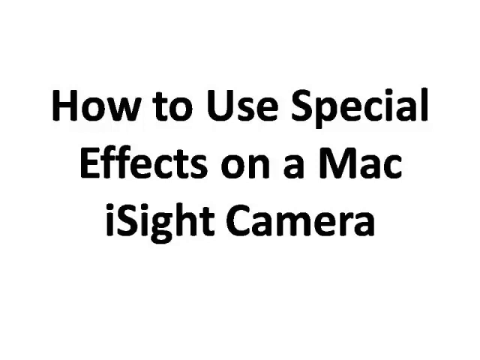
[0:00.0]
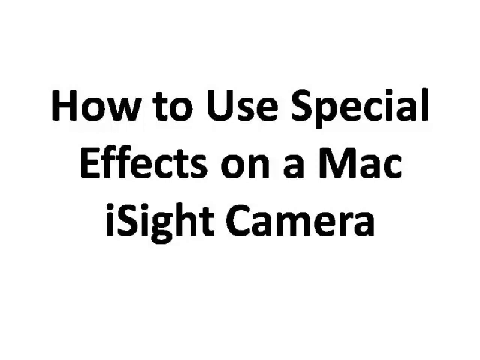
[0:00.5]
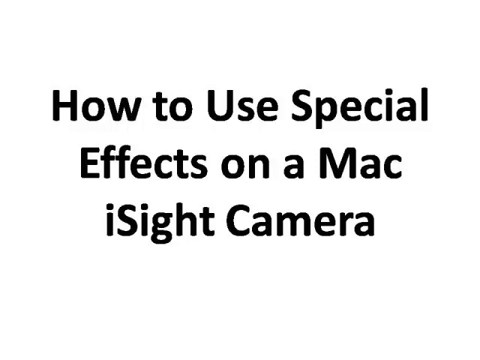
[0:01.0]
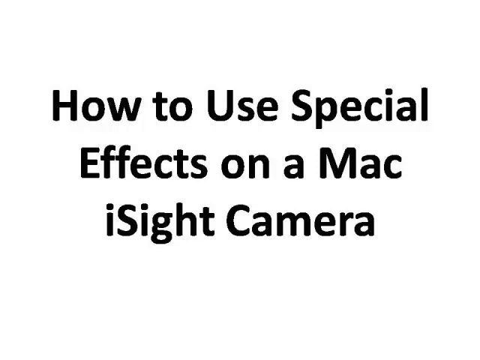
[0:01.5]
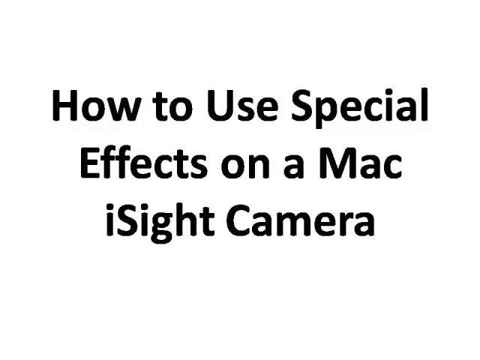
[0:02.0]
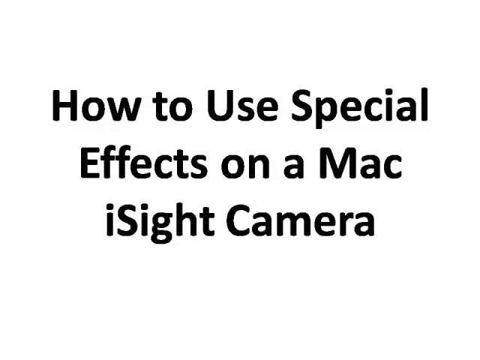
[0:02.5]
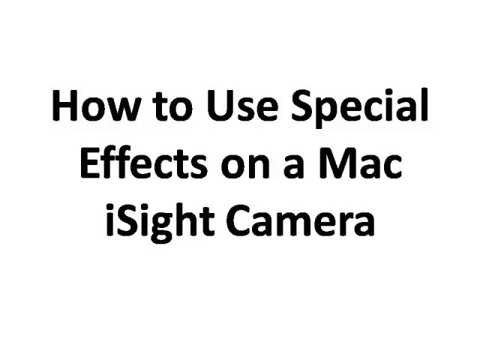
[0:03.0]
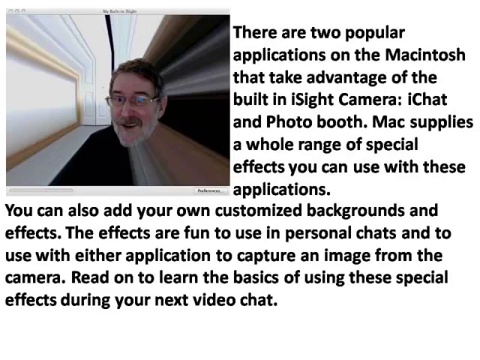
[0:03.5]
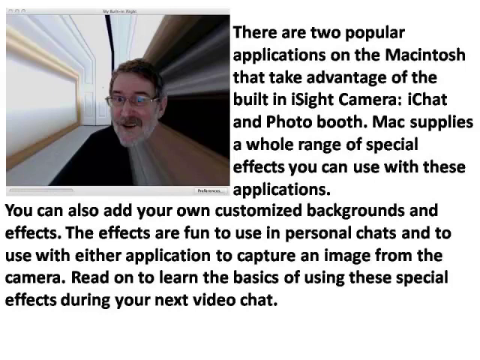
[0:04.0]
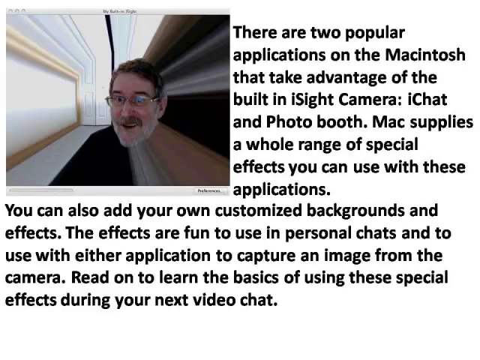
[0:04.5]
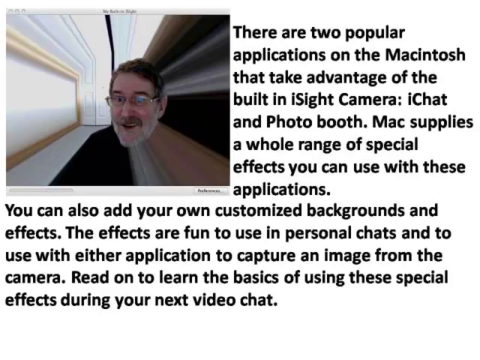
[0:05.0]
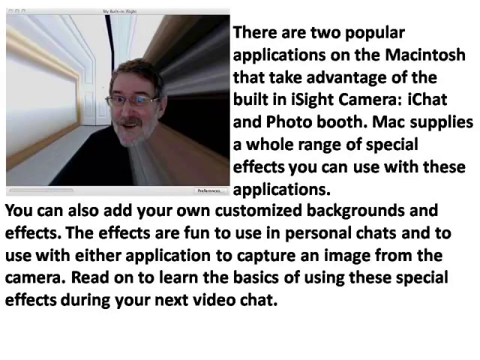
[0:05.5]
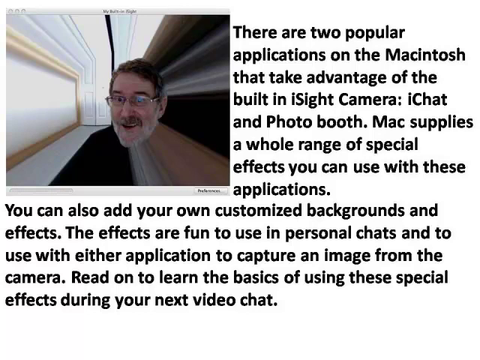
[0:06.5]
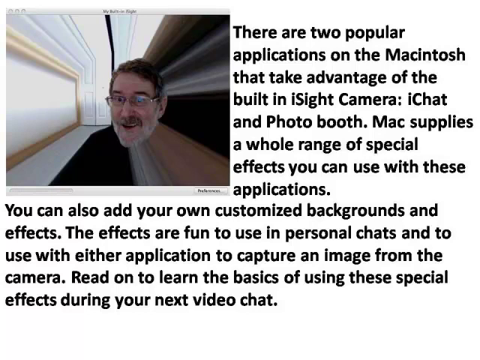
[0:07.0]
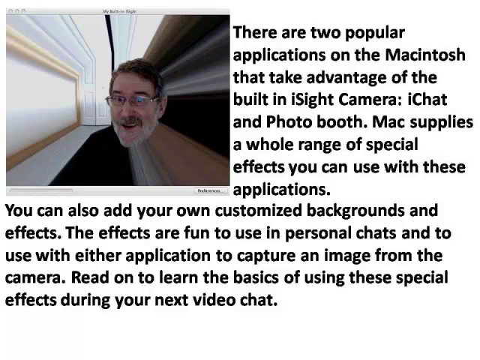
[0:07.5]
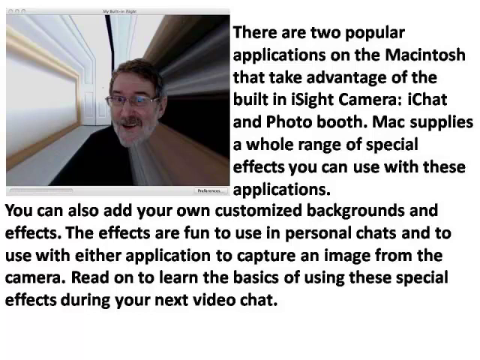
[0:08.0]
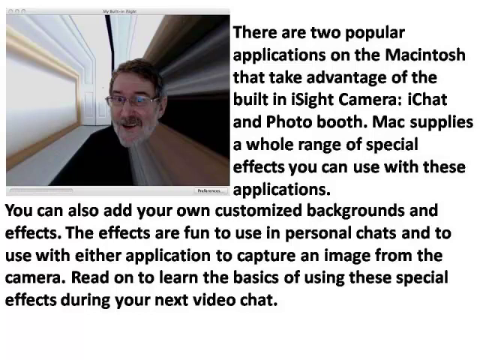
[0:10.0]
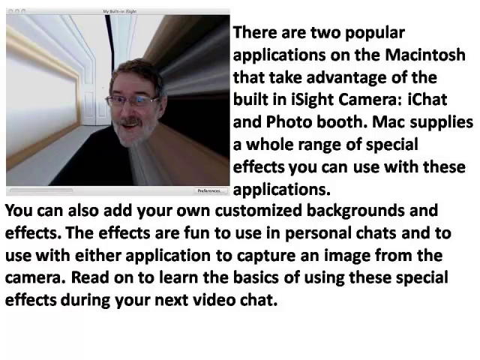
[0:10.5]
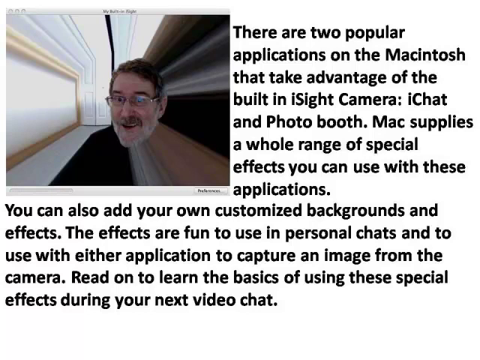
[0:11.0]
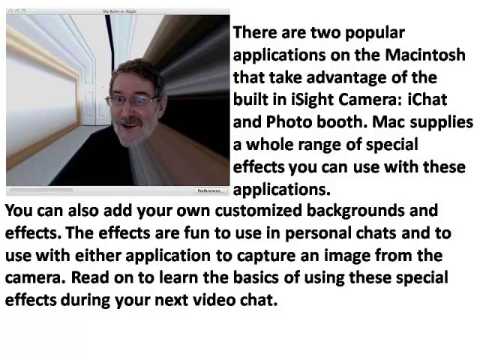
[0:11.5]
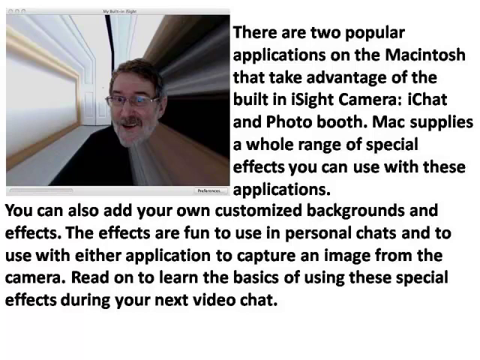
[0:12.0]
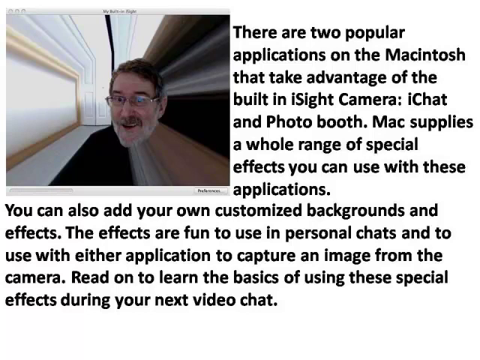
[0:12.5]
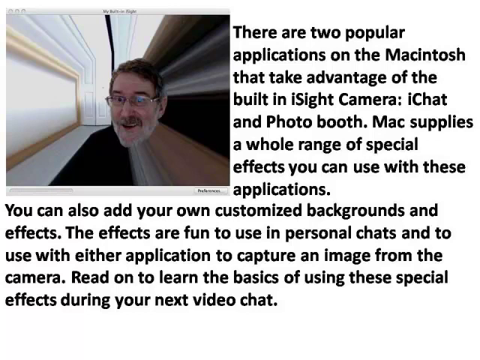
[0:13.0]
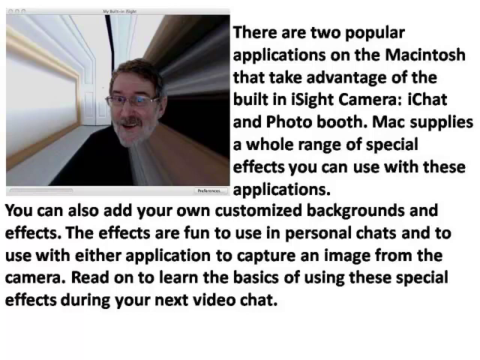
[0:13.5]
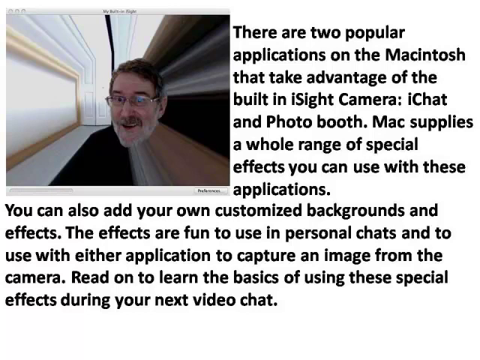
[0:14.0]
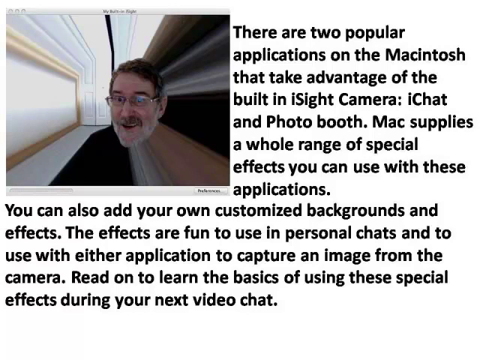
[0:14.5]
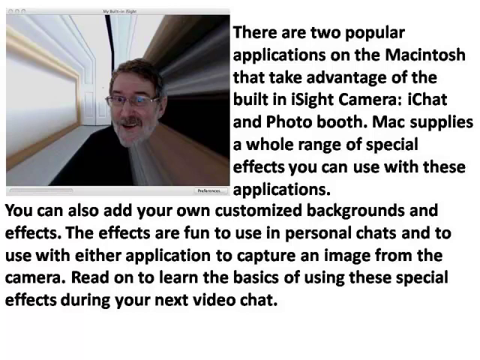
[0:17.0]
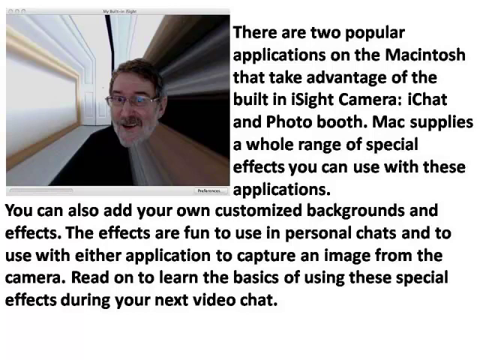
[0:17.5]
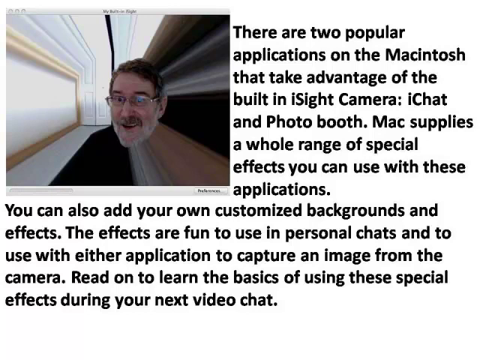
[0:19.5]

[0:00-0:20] Black text on a white background reads "how to use special effects on a Mac iSight camera." Next comes an image of a man's head and a room with a lot of streaky effects. Text then mentions two popular applications that take advantage of the built-in iSight camera, iChat and Photobooth, and continues: "Mac supplies a whole range of special effects you can use with these applications. You can also add your own customized backgrounds and effects. The effects are fun to use in personal chats and to use with either application to capture an image from the camera. Read on to learn the basics of using these special effects during your next video chat." The video then cuts back to the first screen, which reads "how to use special effects on a Mac iSight camera."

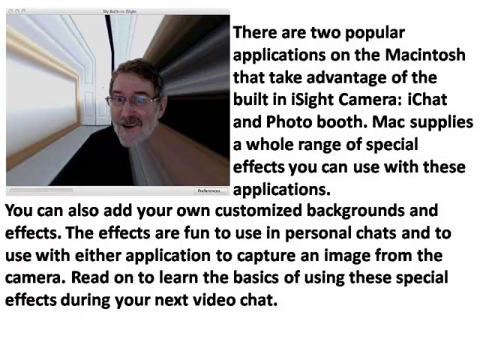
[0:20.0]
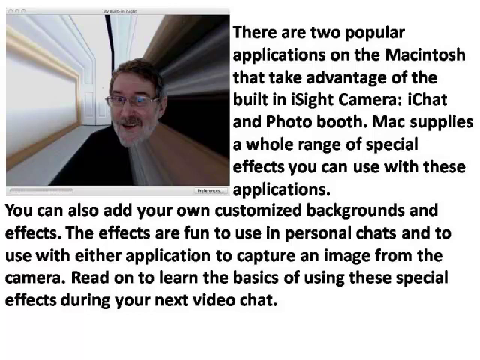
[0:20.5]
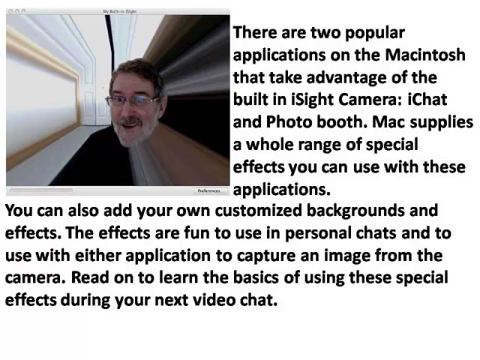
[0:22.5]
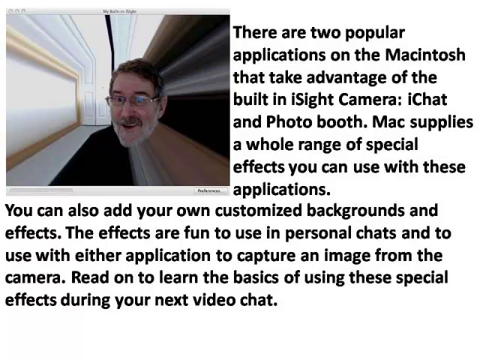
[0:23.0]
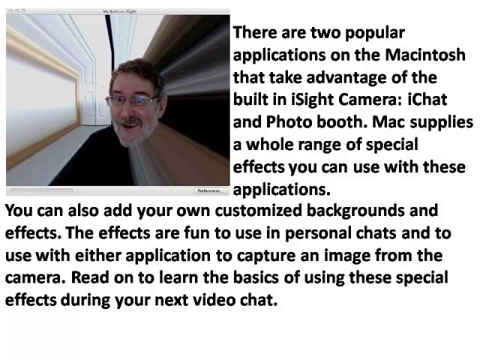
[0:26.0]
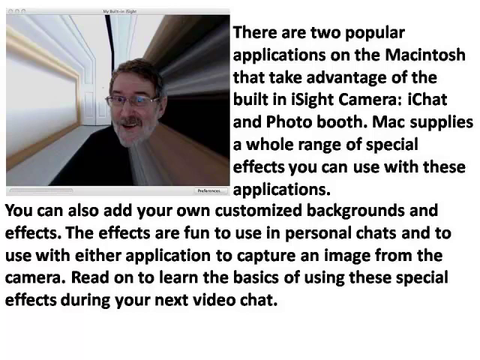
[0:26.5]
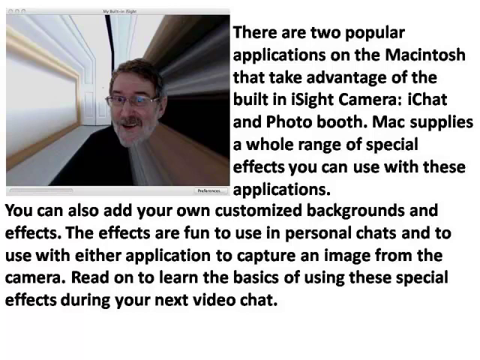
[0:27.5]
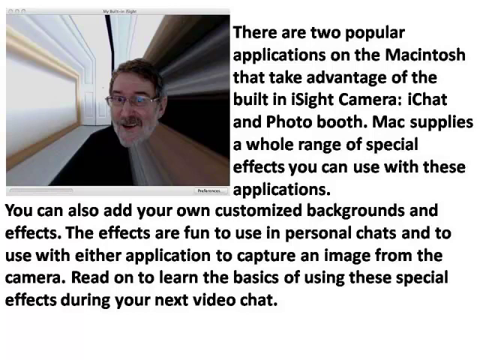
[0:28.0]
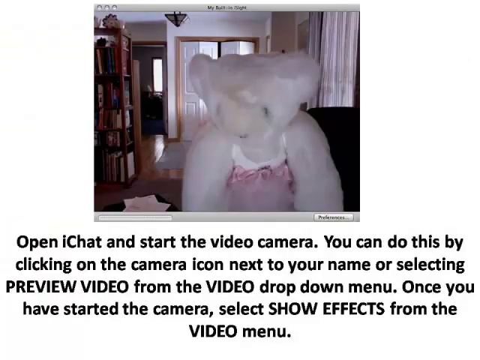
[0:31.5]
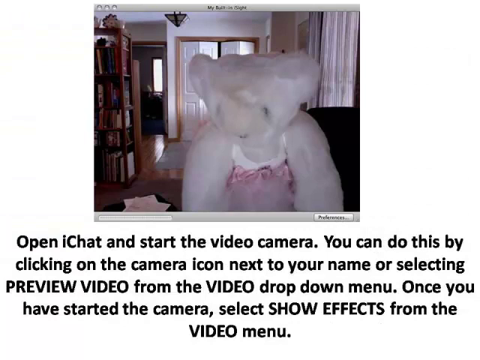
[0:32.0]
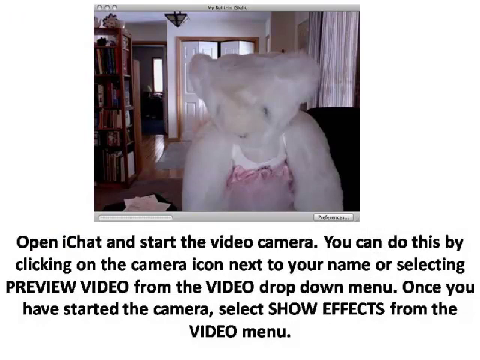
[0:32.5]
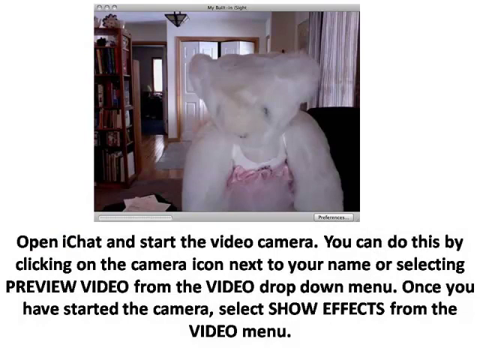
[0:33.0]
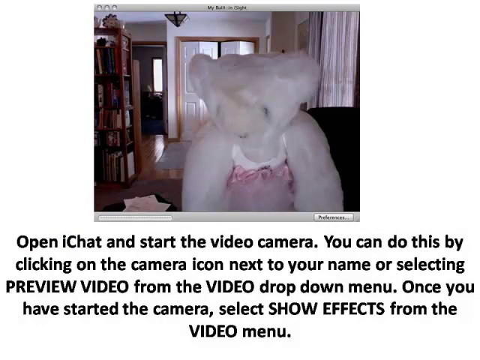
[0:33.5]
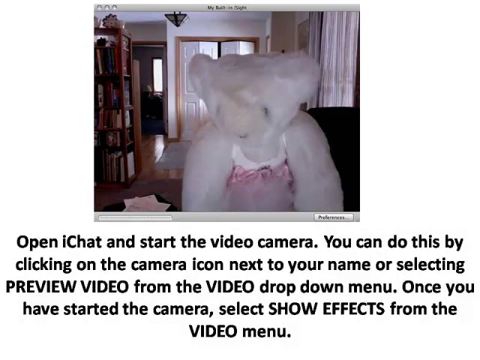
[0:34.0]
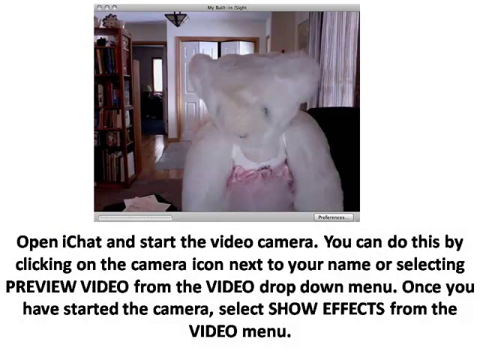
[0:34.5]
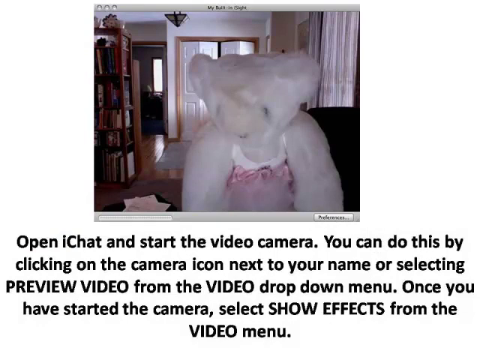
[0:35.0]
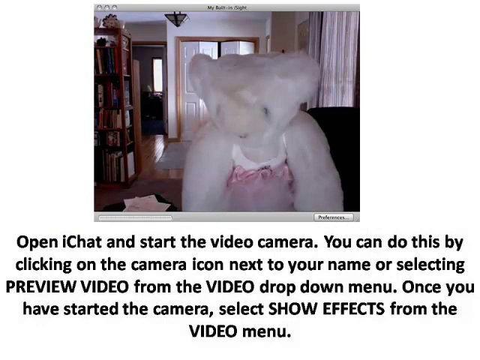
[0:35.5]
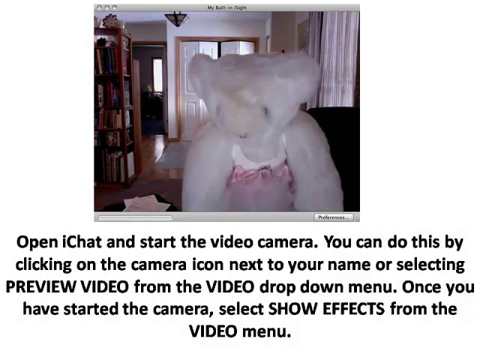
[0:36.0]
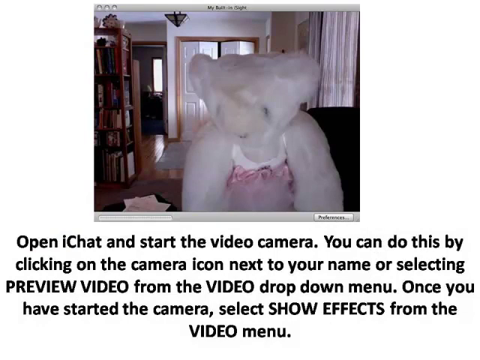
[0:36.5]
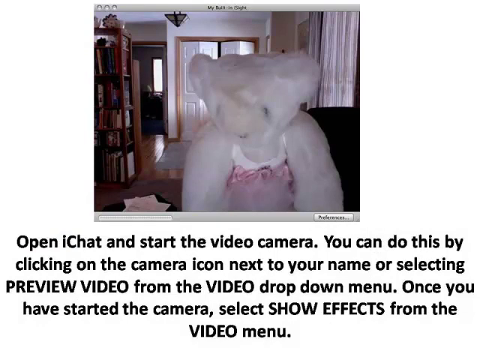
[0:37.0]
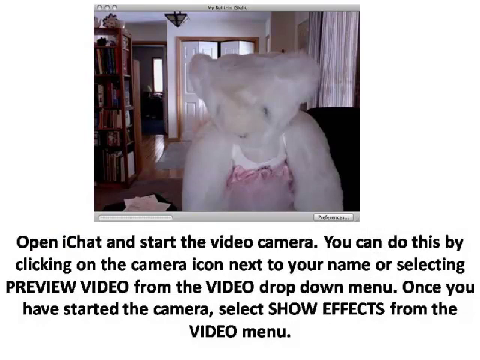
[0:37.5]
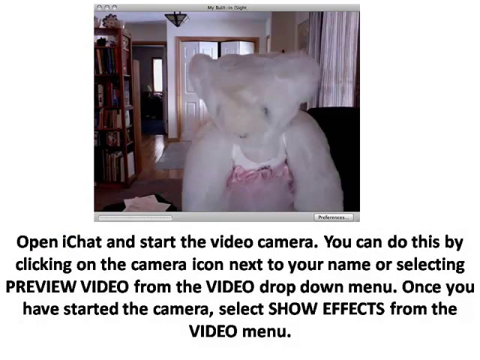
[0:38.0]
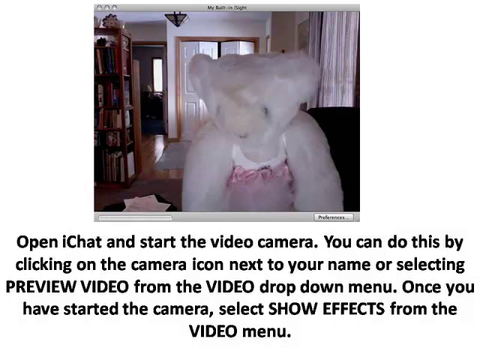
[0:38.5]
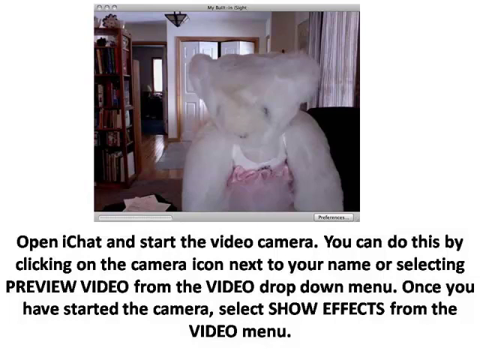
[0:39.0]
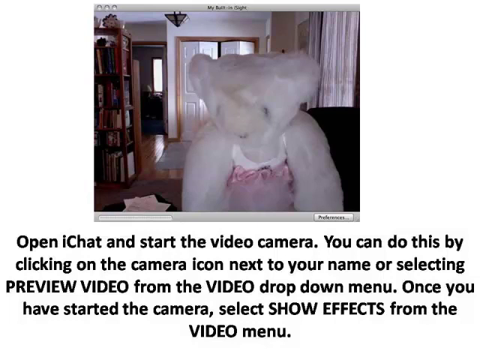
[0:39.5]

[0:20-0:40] The screen explaining the applications is still shown. It reads: "there are two popular applications on the Macintosh to take advantage of the built-in iSight camera. iChat and Photobooth. Mac supplies a whole range of special effects that you can use with these applications." The text goes on to mention customized backgrounds and effects, using the effects in personal chats and capturing an image, and reading on to learn the basics of using the special effects during the next video chat. The video then moves to a different screen with a slide or image of a white teddy bear being held up in what looks to be a room of a house. In the background are some closet doors, some curtains, a bookshelf, a door and some furniture. Below the image is written: "open iChat and start the video camera. You can do this by clicking on the camera icon next to your name or selecting preview video from the video drop down menu. Once you have started the camera, select show effects from the video menu." There does not seem to be any actual motion; the video is images with text.